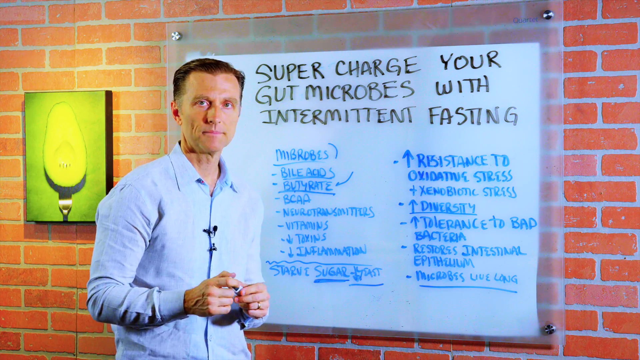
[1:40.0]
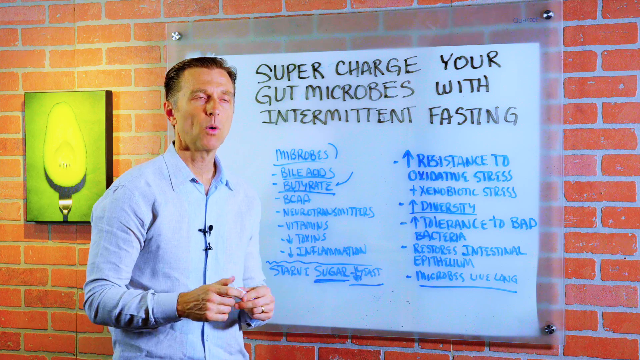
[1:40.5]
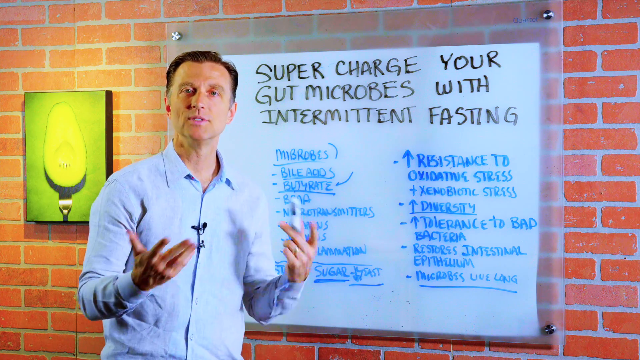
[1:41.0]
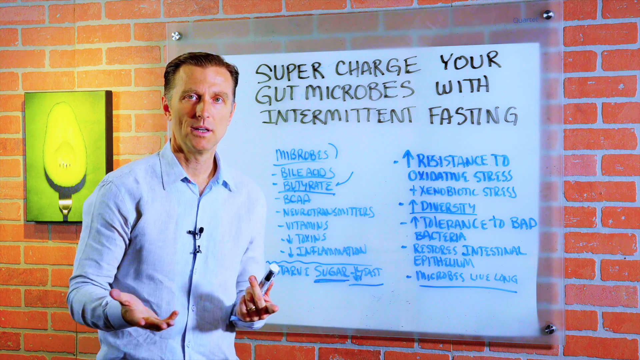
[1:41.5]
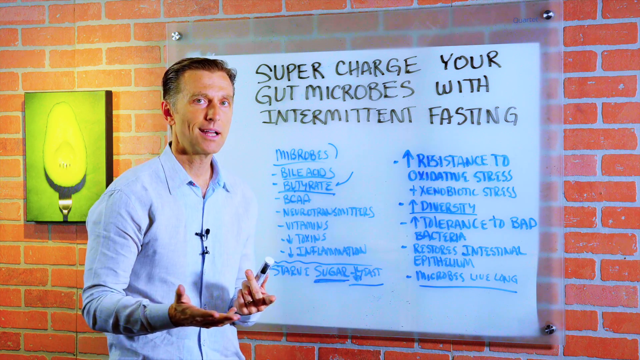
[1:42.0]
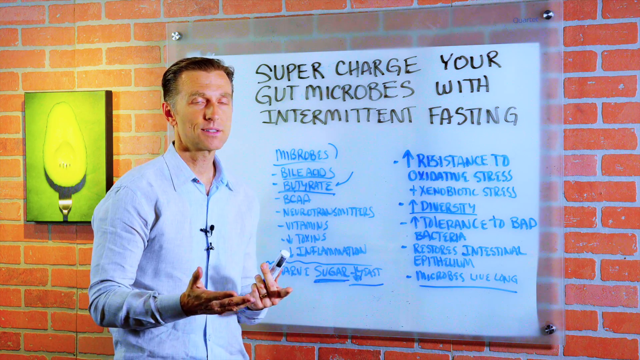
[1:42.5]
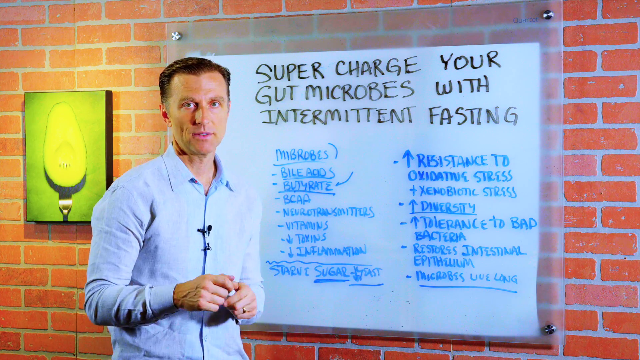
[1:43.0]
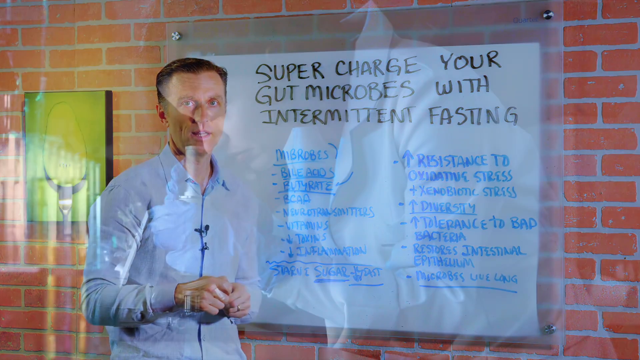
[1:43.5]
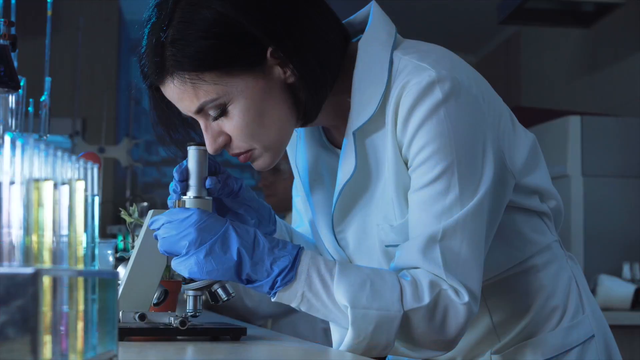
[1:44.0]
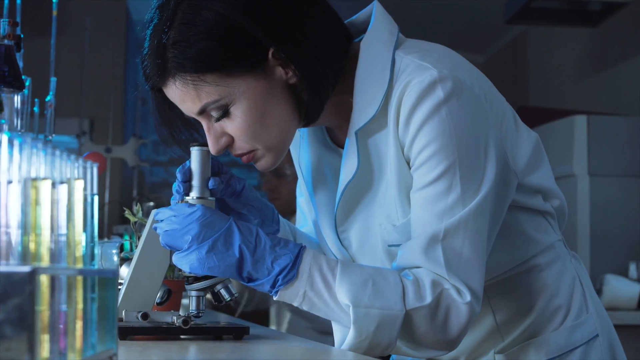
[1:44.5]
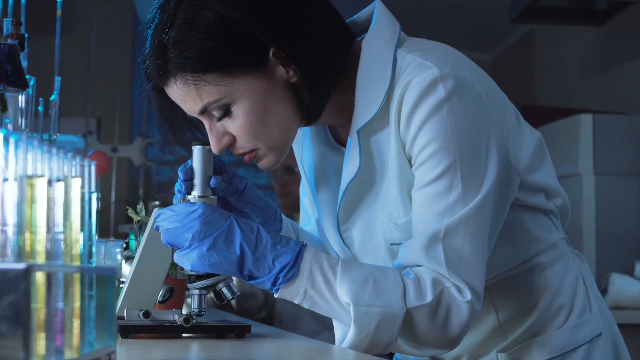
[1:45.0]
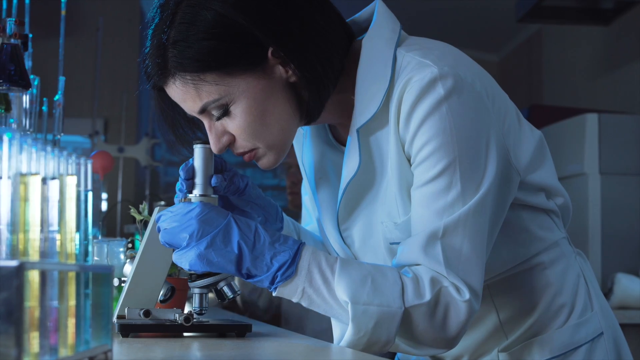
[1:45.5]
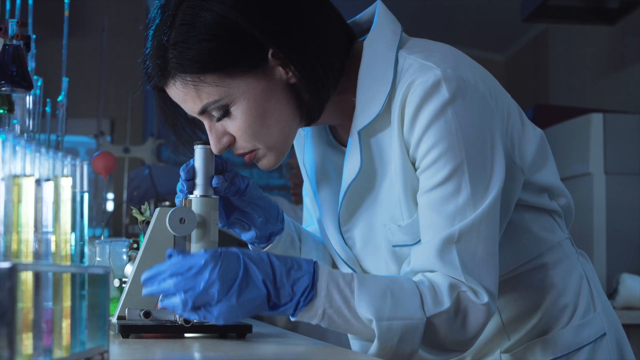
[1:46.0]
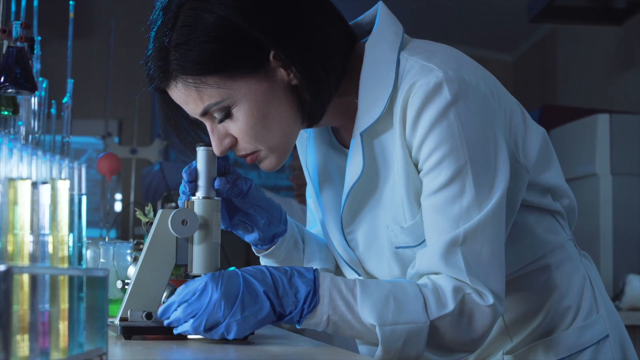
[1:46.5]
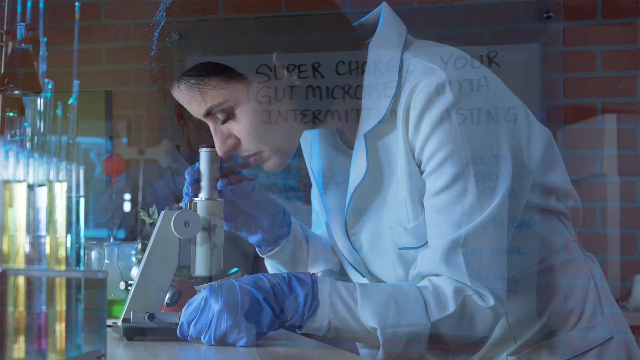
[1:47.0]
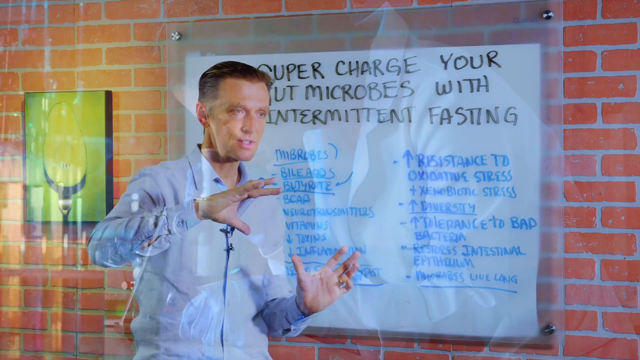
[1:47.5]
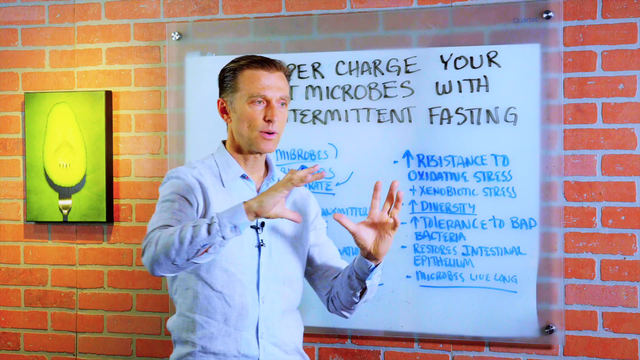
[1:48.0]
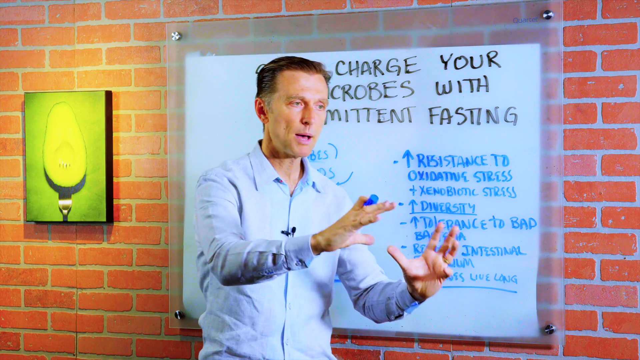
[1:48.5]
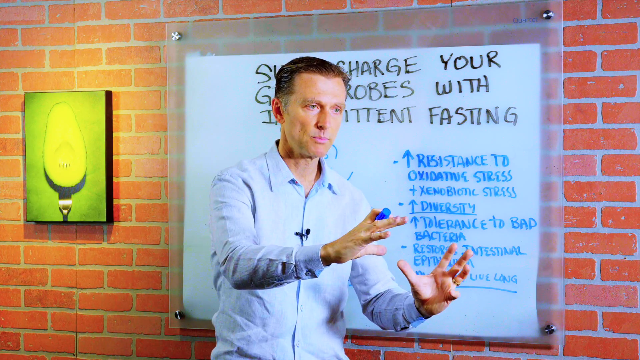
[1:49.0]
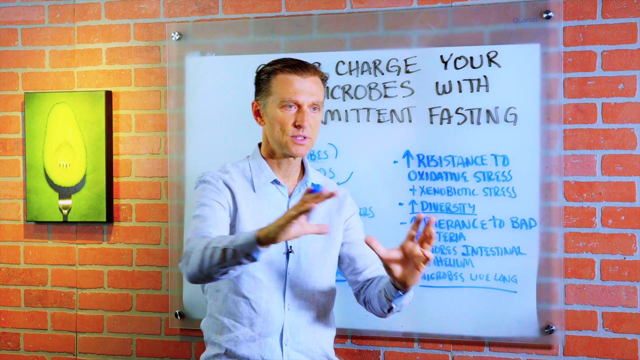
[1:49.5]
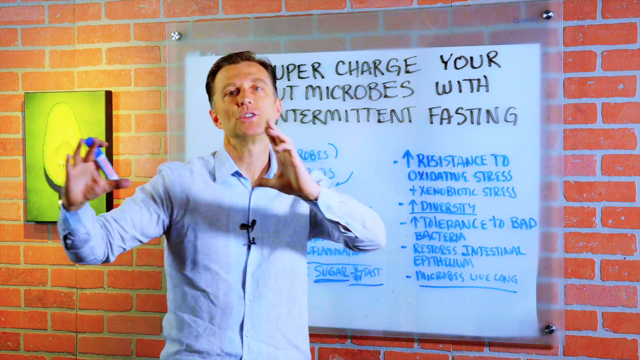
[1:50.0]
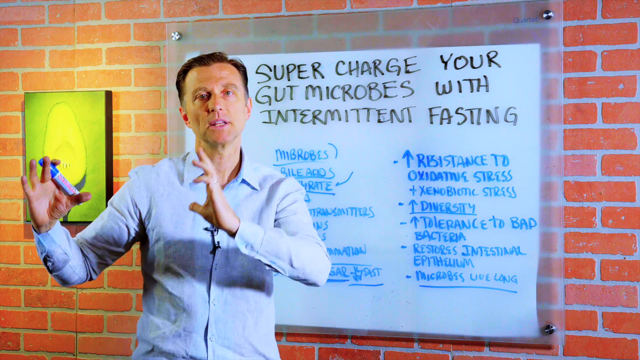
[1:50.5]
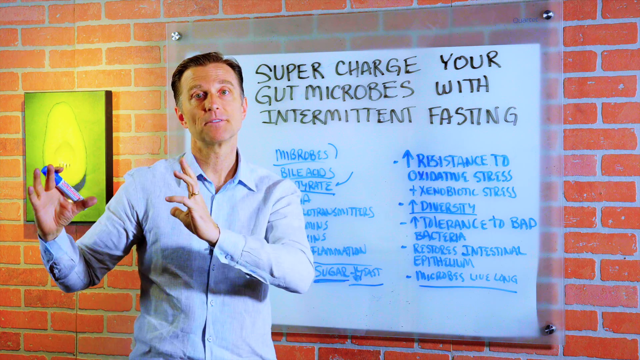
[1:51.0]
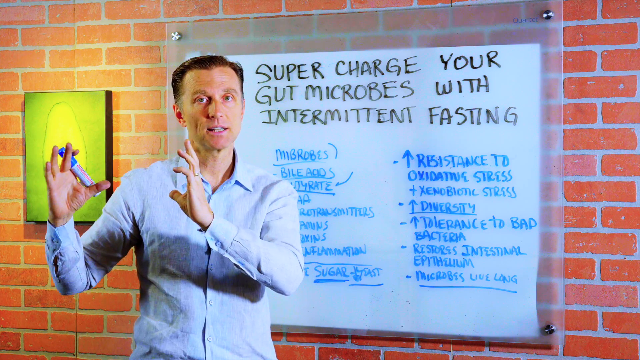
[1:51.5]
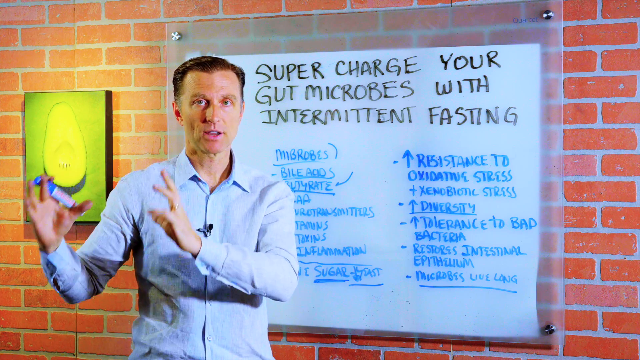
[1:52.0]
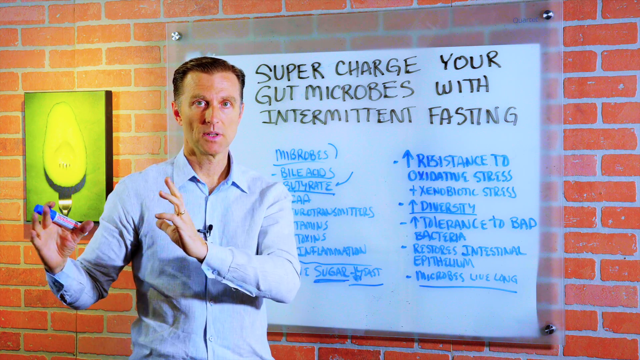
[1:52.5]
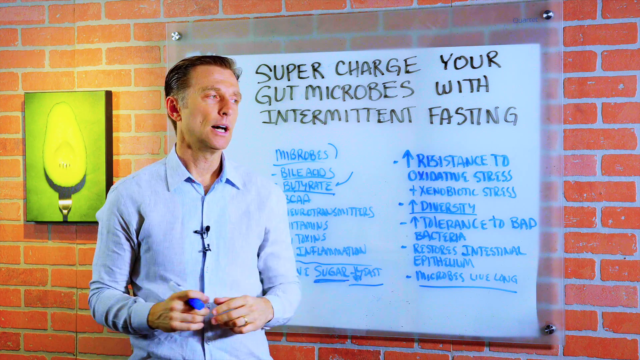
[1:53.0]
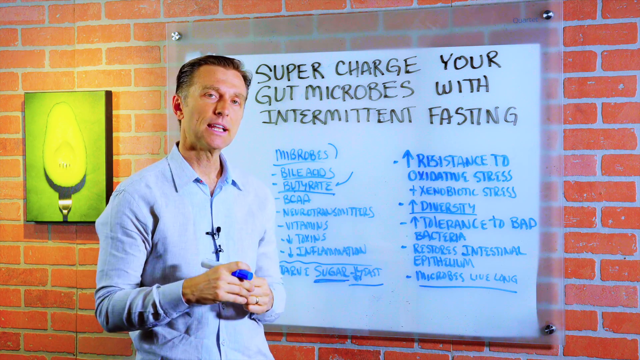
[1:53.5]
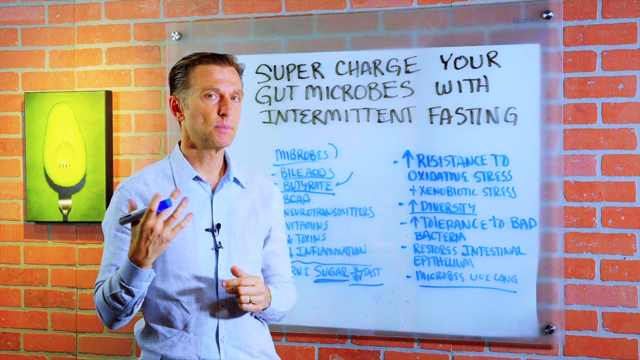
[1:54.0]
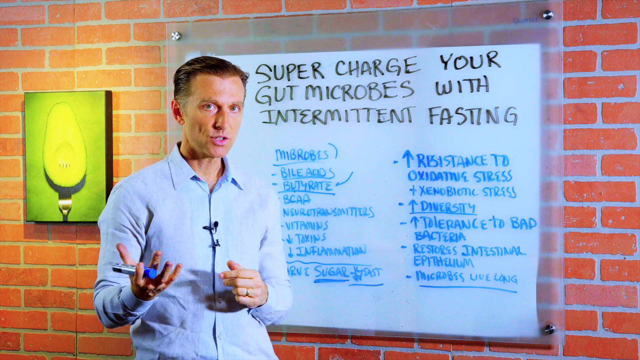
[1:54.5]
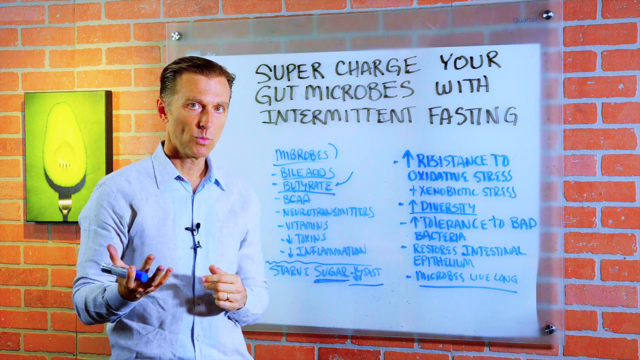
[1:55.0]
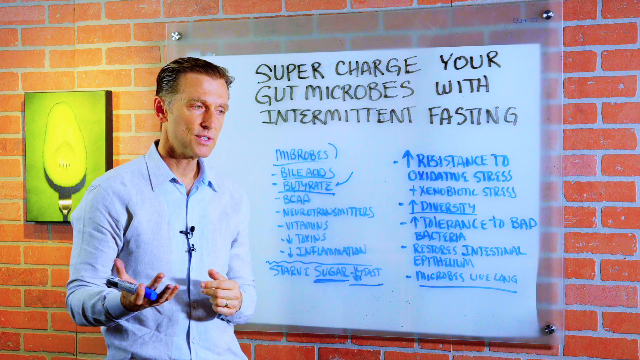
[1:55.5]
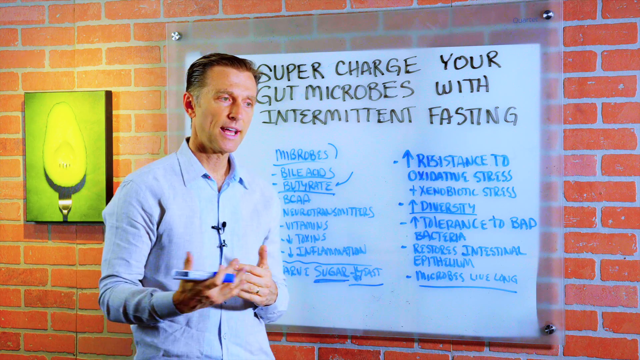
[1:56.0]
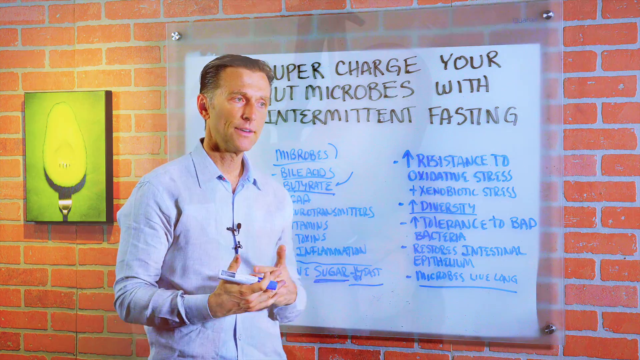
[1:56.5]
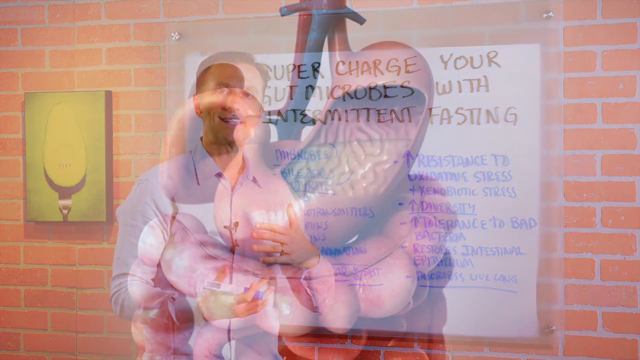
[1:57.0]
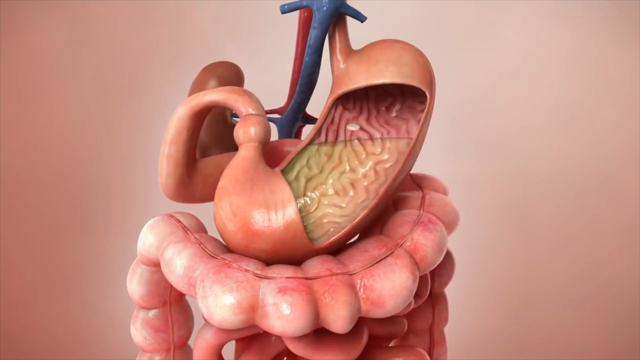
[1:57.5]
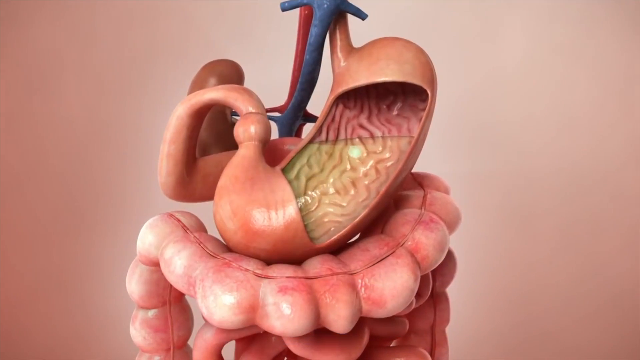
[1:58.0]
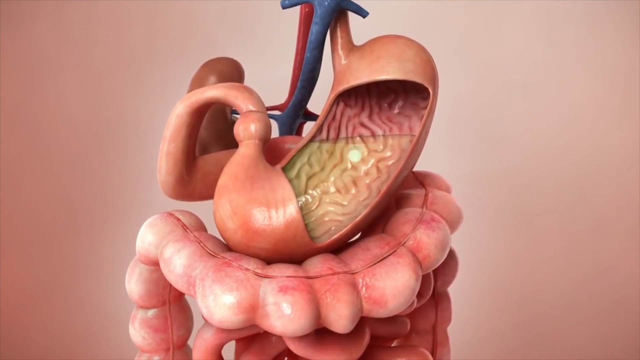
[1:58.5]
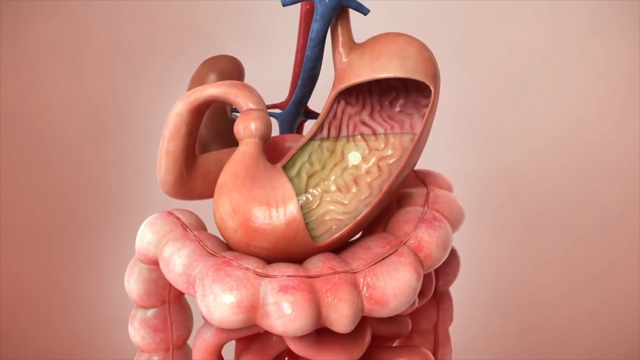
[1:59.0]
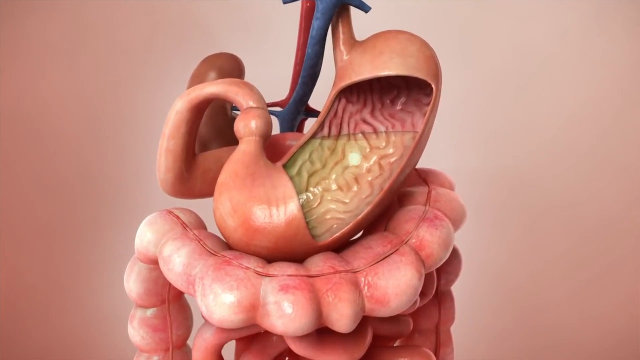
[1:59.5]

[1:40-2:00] A man with a slender build, wearing a pale blue shirt, stands beside a whiteboard on an orange brick wall. The whiteboard has a header in black capital letters reading "supercharge your gut microbes with intermittent fasting," and below it, in smaller blue text, are two columns of bulleted information. The man speaks and gestures slightly with his hands. The screen transitions to a woman in a white lab coat and blue gloves peering into the lenses of a microscope; on the desk table in front of her are some test tubes with golden yellow liquid. She continues to peer as she adjusts the microscope. The man appears again, speaking and gesturing with his elbows bent and hands raised slightly. He then drops his hands, revealing a blue marker in his right hand. Next comes a 3D illustration of a human stomach sliced open to show the inside, resting on the intestines.